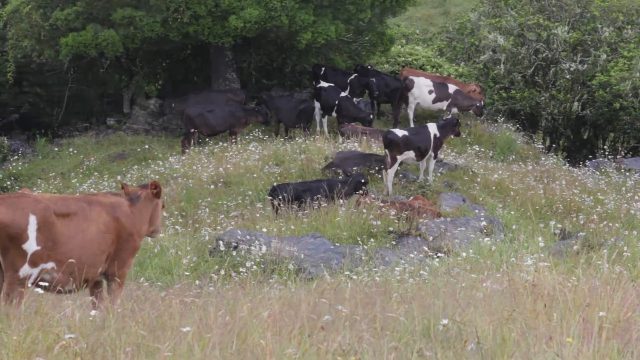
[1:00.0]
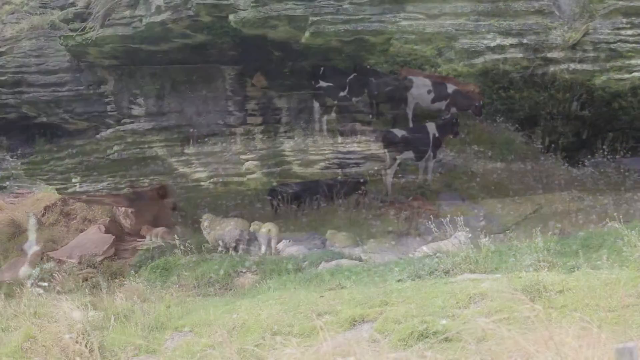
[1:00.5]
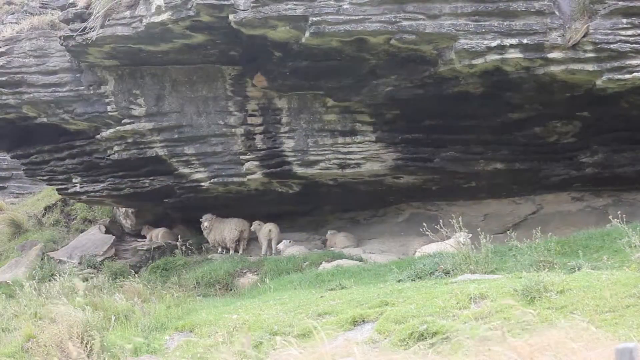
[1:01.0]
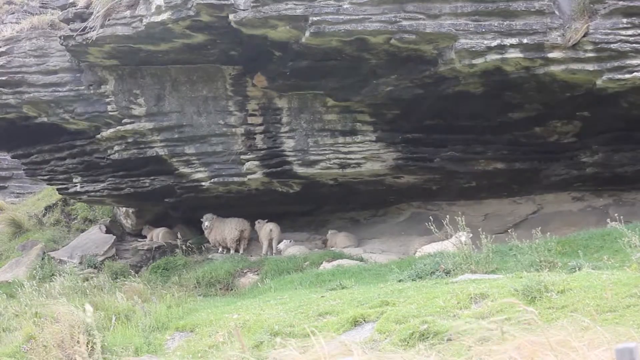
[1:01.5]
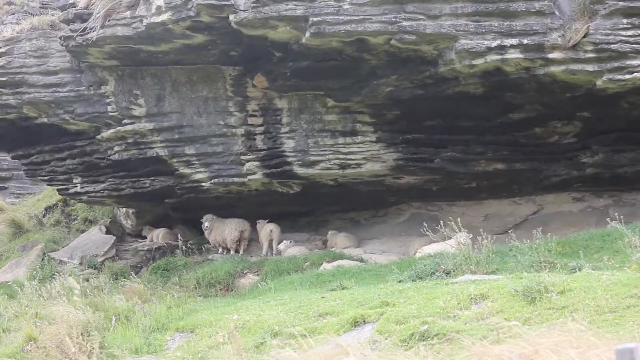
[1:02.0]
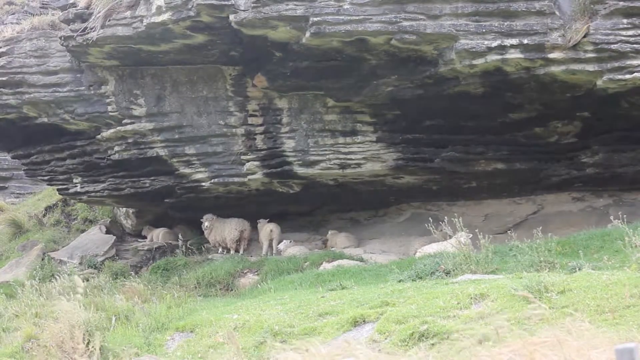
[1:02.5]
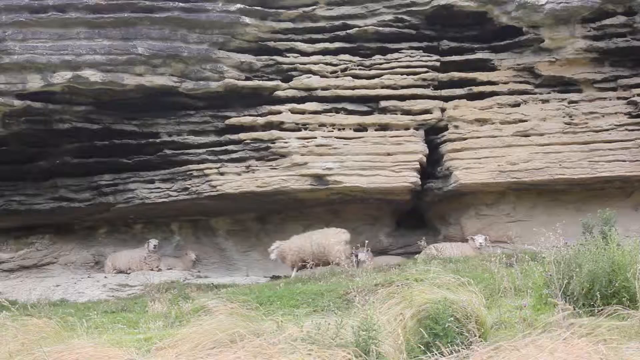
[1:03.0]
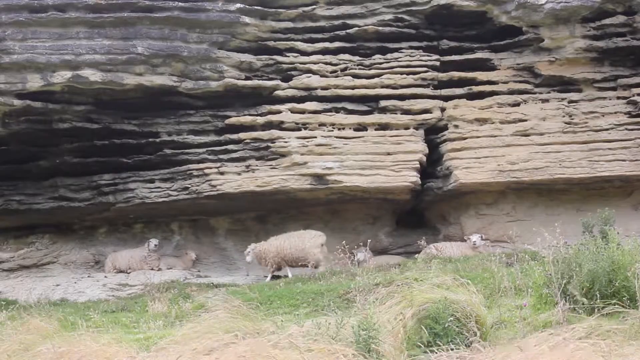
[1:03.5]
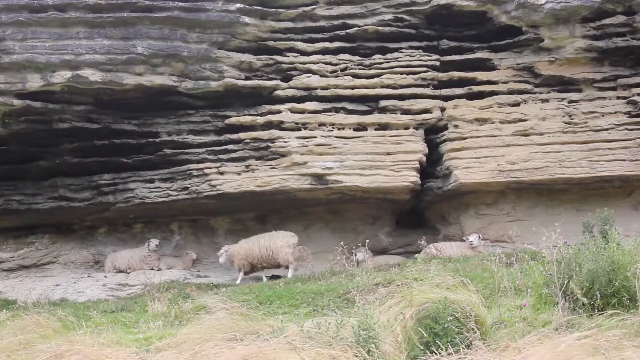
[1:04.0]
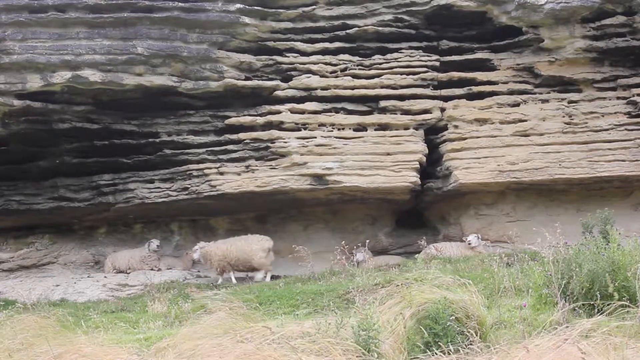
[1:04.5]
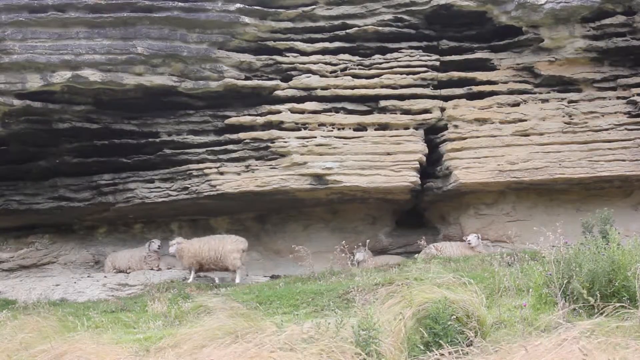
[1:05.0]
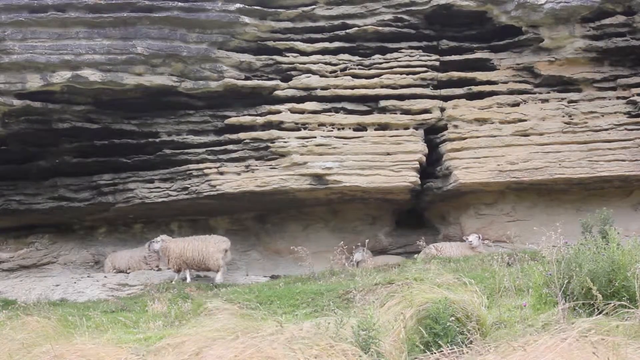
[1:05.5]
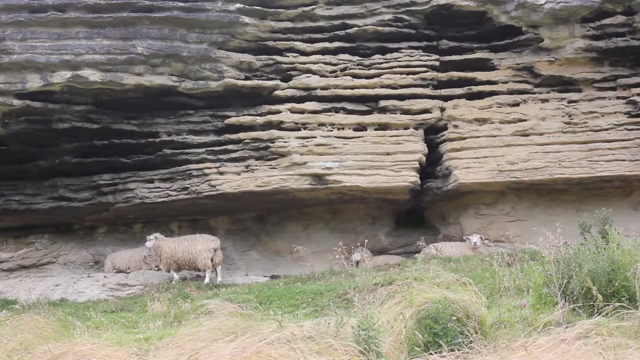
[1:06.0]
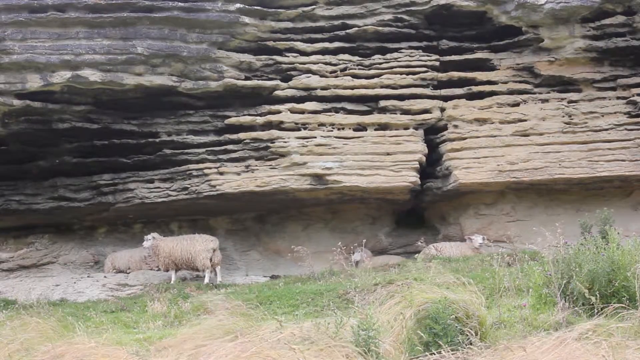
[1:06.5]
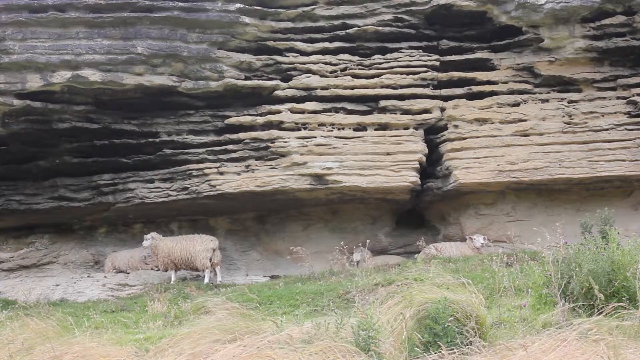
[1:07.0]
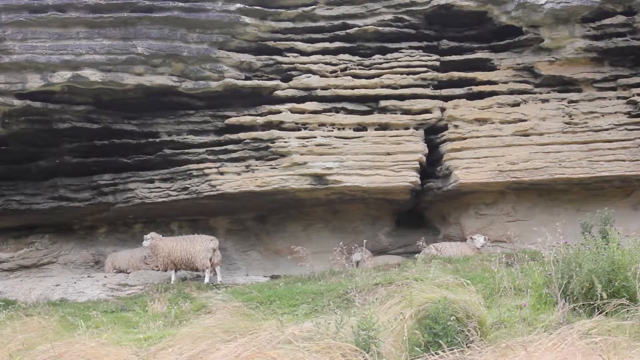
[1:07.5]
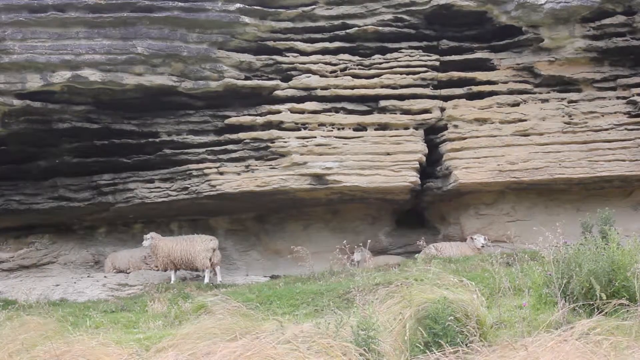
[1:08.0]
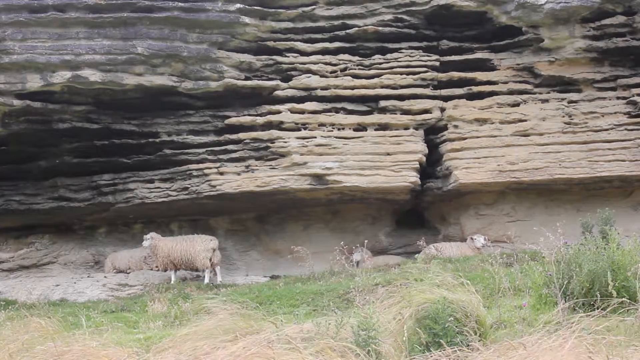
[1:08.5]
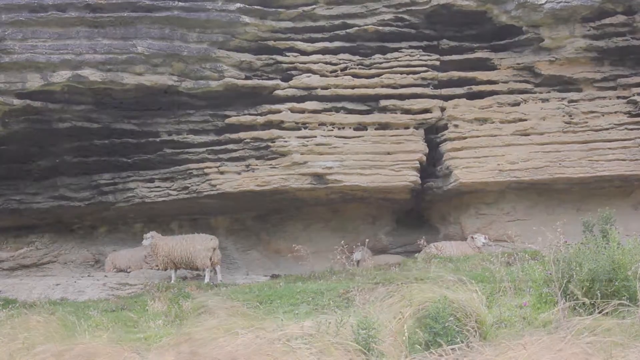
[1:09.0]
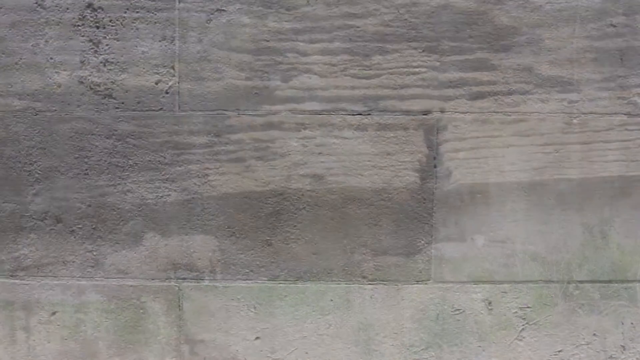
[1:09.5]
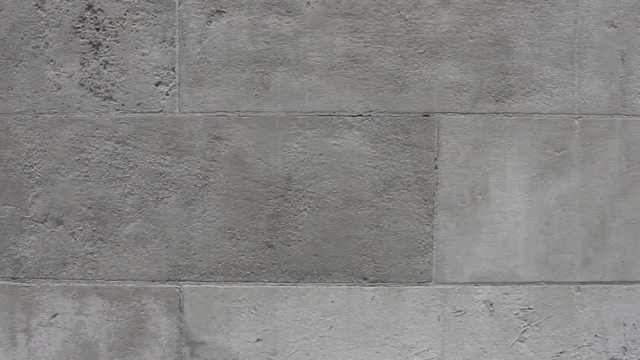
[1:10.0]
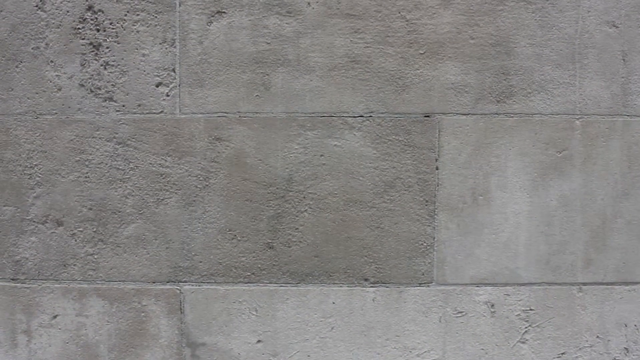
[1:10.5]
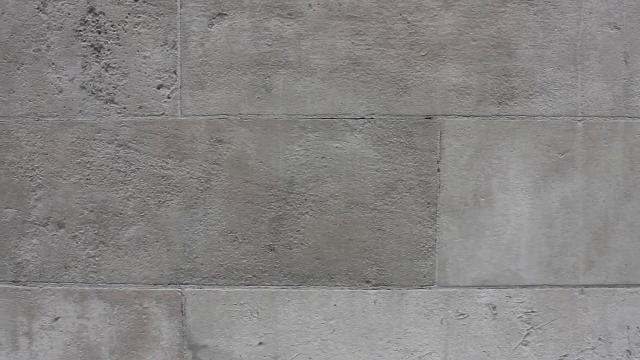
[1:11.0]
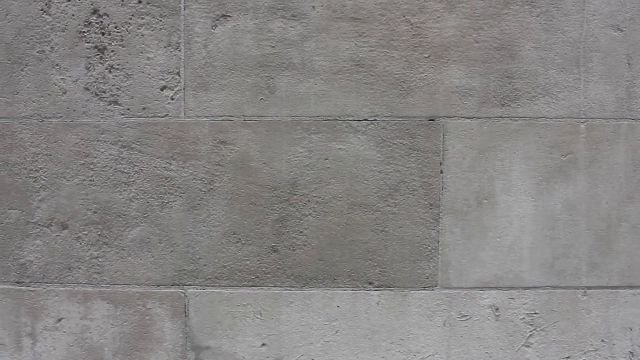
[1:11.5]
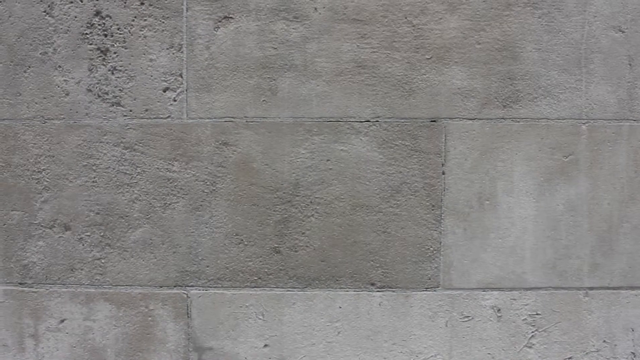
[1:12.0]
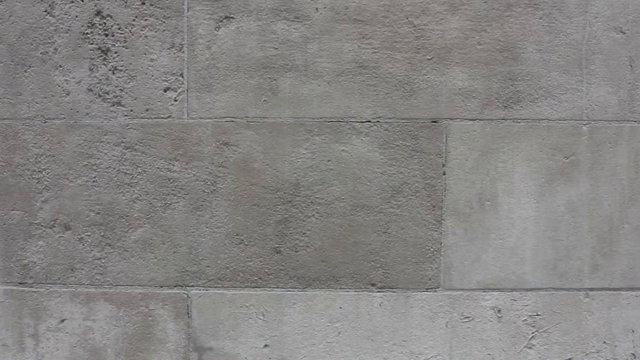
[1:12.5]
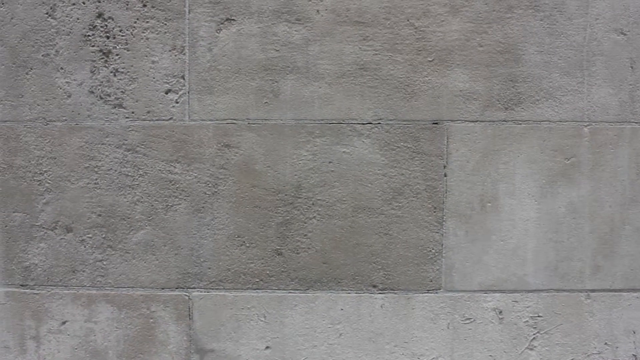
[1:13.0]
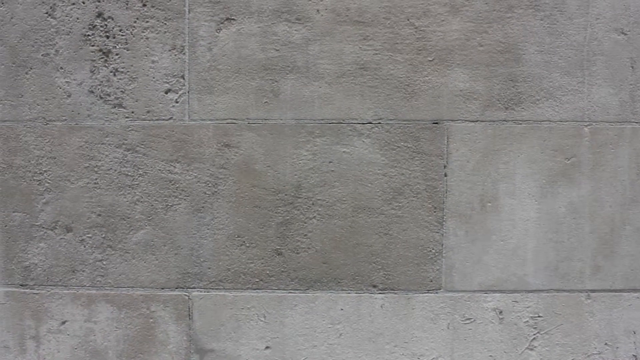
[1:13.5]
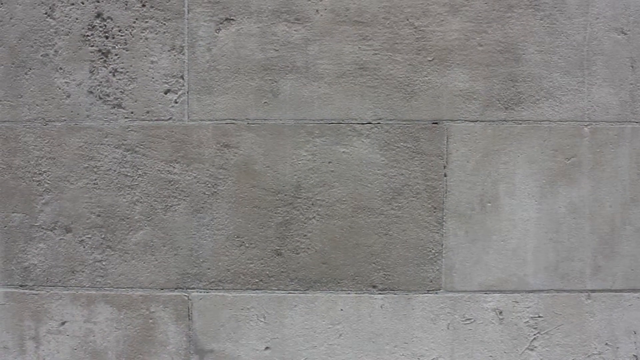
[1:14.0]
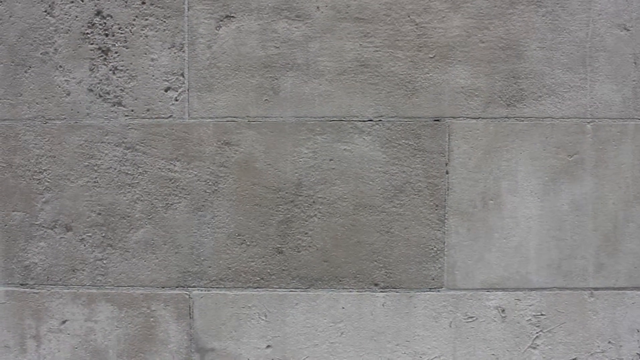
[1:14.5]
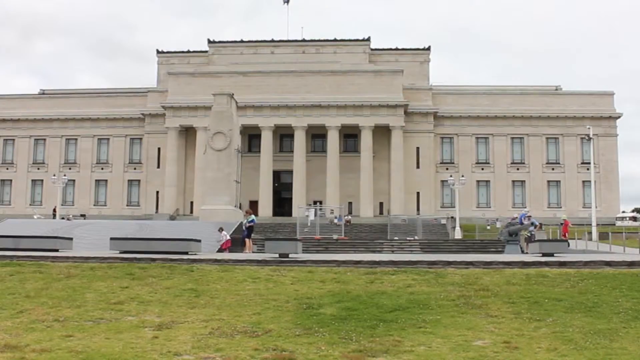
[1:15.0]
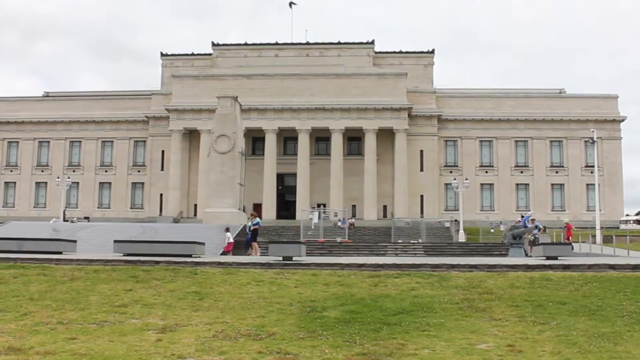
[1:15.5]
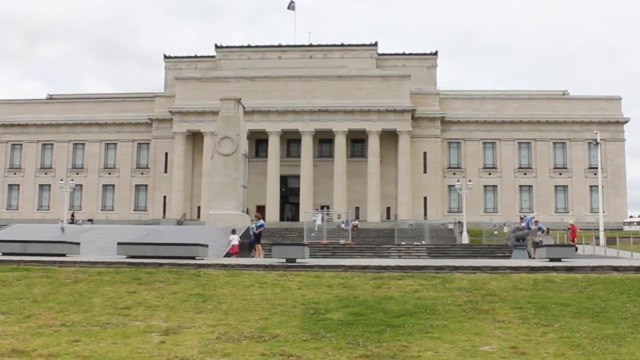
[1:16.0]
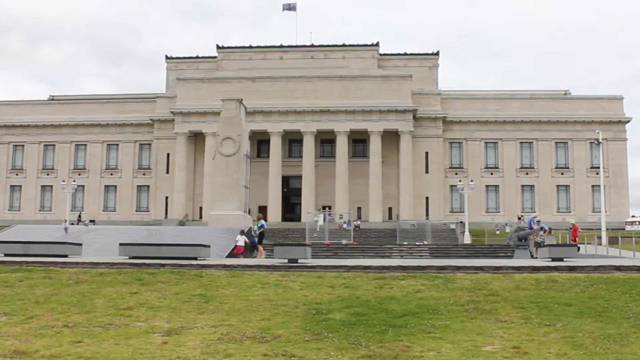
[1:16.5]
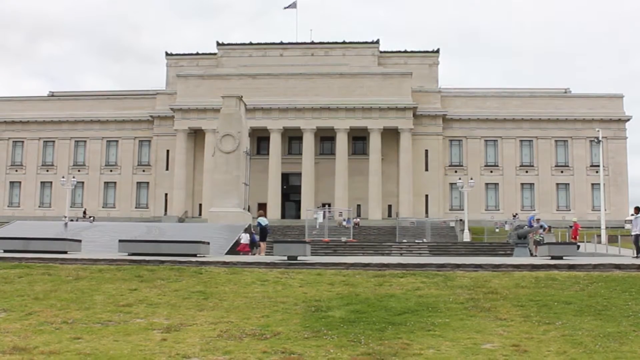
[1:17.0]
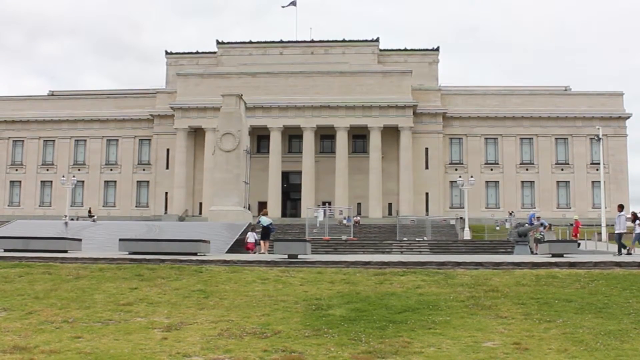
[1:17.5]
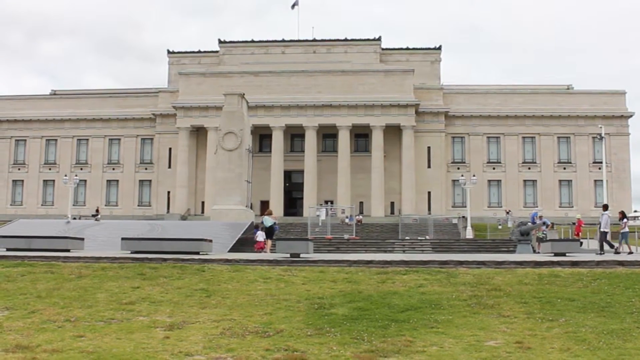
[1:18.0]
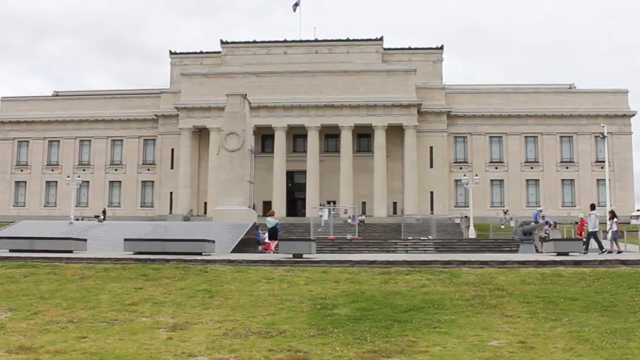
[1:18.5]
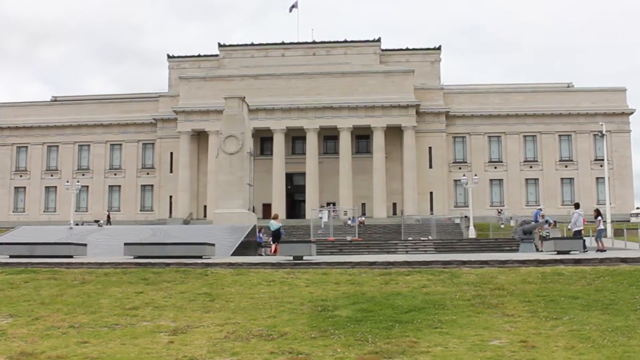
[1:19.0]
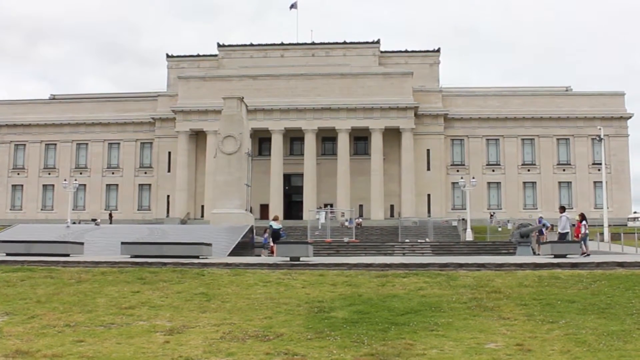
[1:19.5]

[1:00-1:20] A group of cows stands in a grassy green field with many trees in the background, which make it look like there is a shaded green area behind them. The cows vary in color: most are black, but one right next to the camera is mostly brown with a white spot around its hindquarters. Some black and white cows are in the middle, and another brown cow is in the back right, most of its body blocked by another cow, so it is unclear whether it has white spots. The scene then transitions to a group of sheep, seemingly beside a bunch of rocks, sort of like a cliff plateau. The rock texture looks like waves coming in, with the bottom layers a creamy white color and the top parts more black.